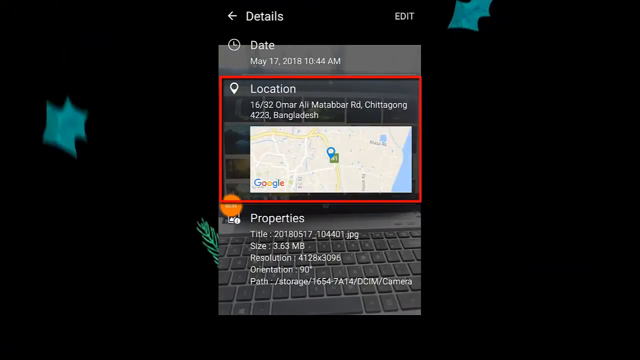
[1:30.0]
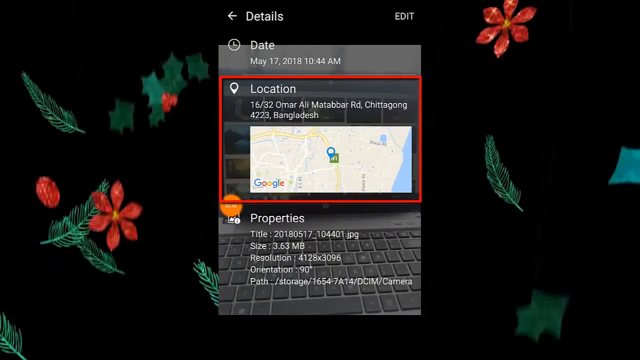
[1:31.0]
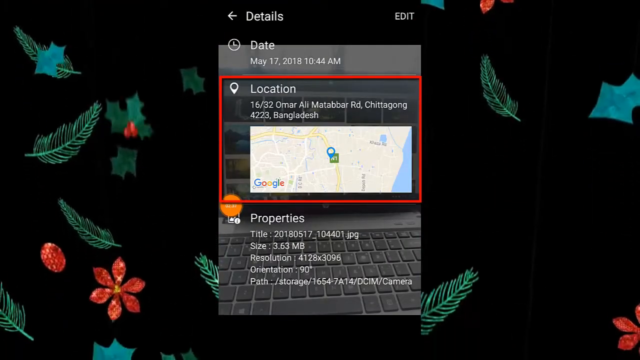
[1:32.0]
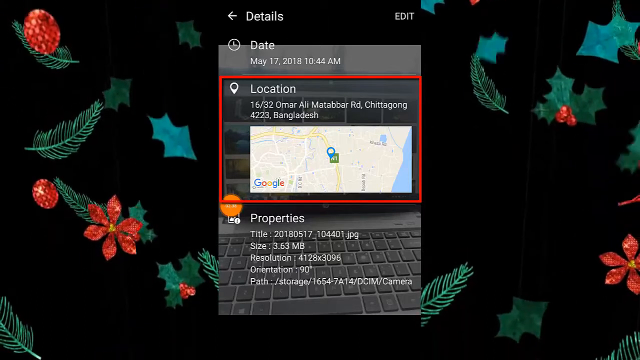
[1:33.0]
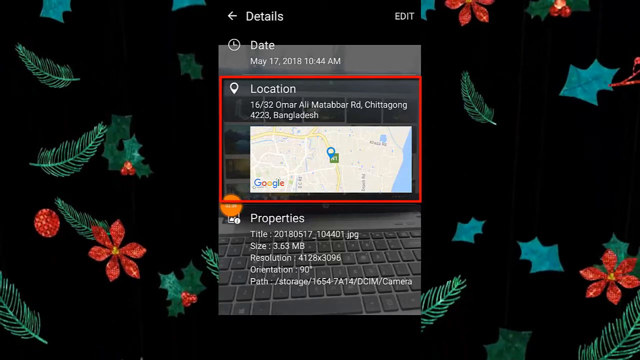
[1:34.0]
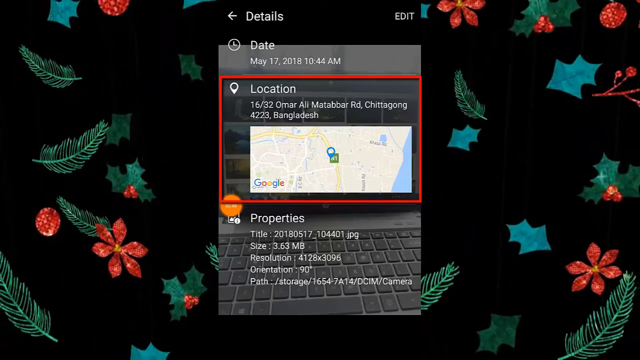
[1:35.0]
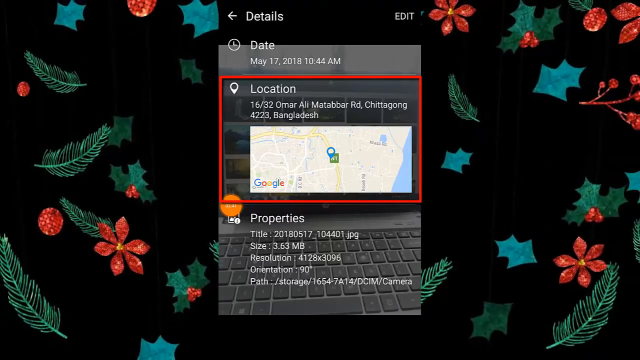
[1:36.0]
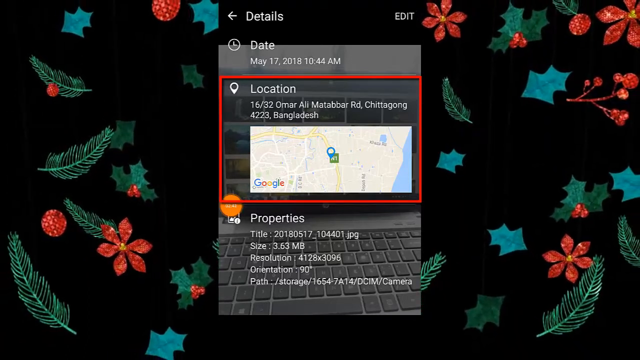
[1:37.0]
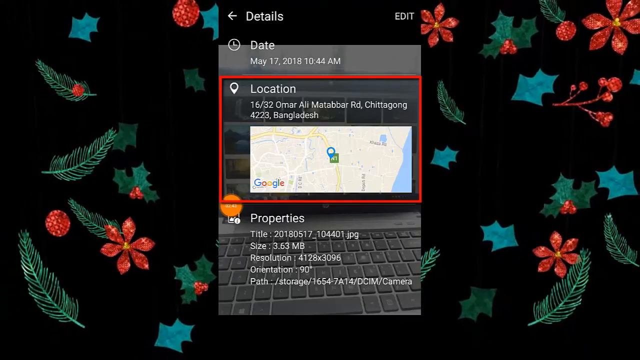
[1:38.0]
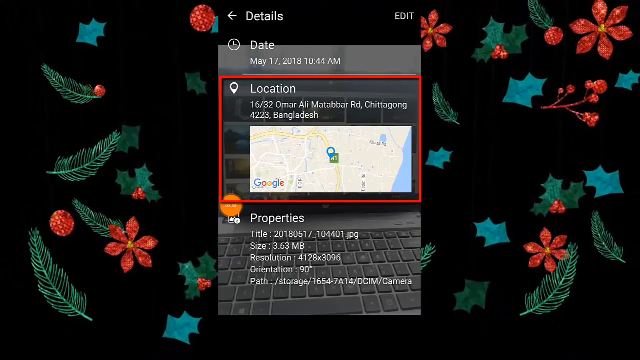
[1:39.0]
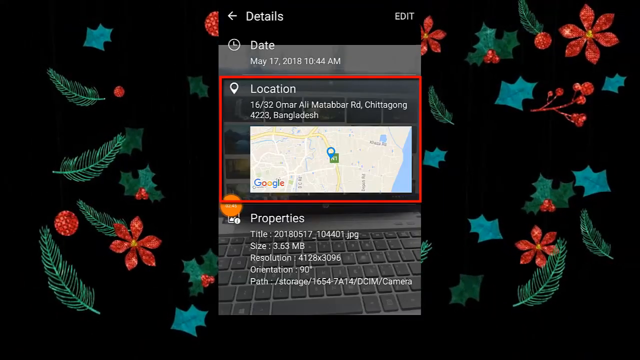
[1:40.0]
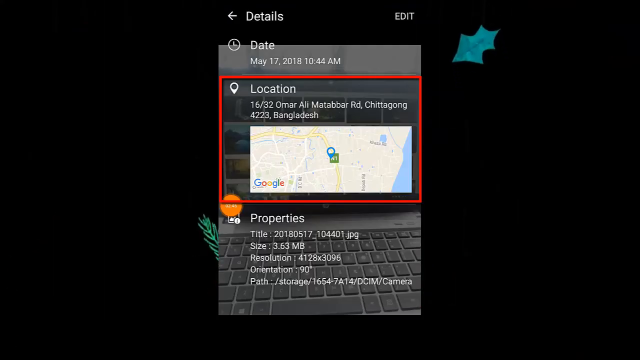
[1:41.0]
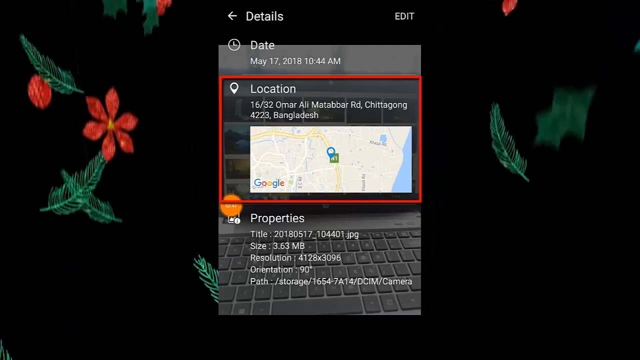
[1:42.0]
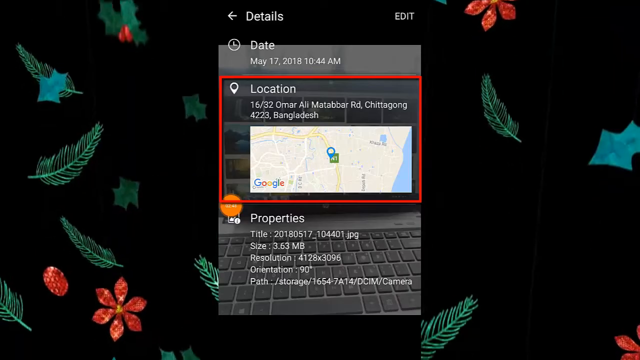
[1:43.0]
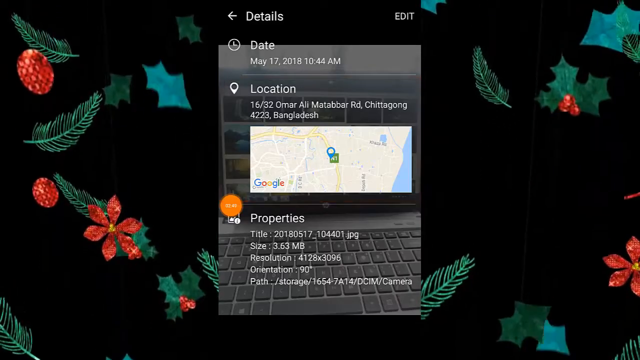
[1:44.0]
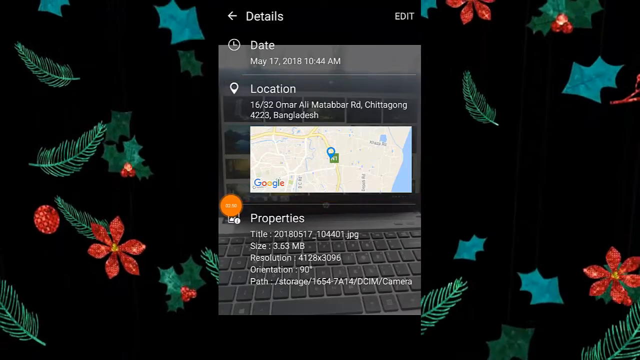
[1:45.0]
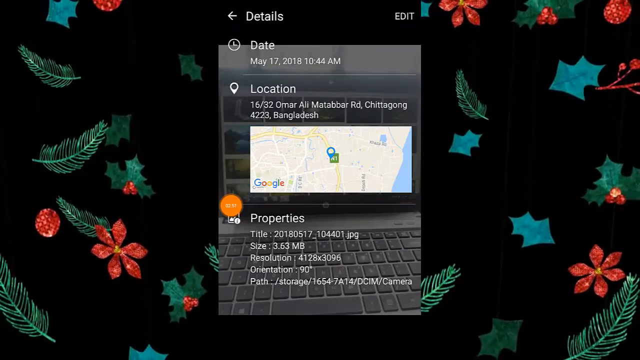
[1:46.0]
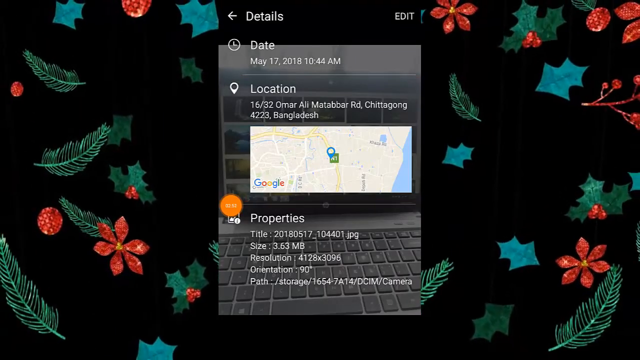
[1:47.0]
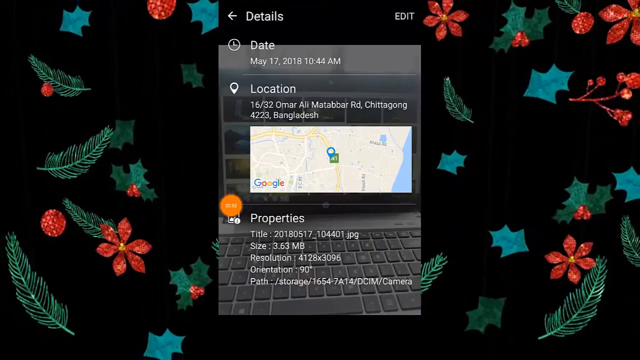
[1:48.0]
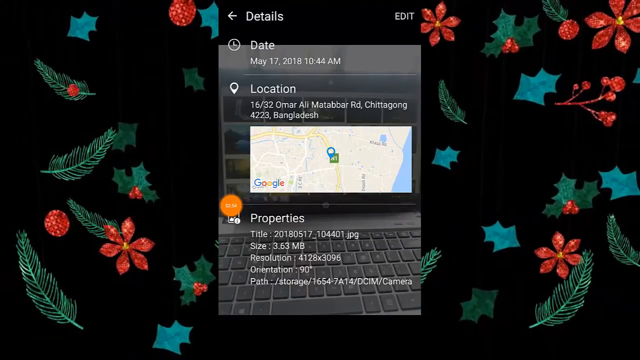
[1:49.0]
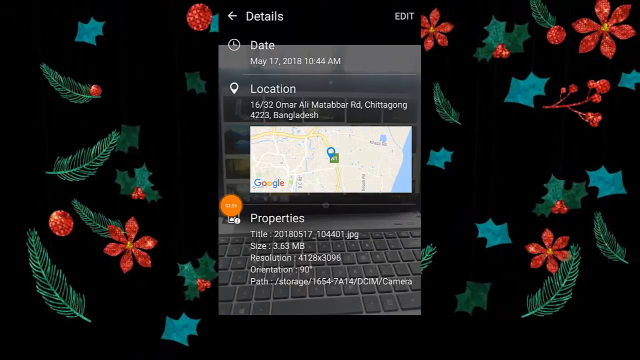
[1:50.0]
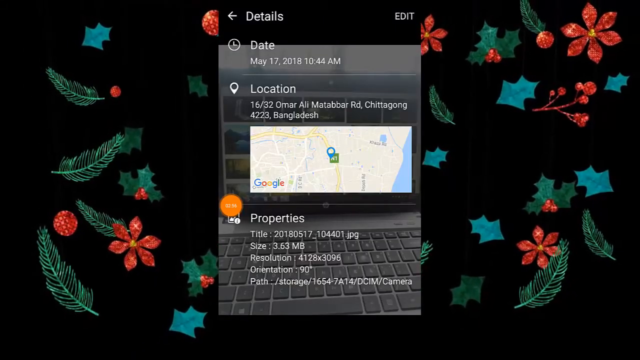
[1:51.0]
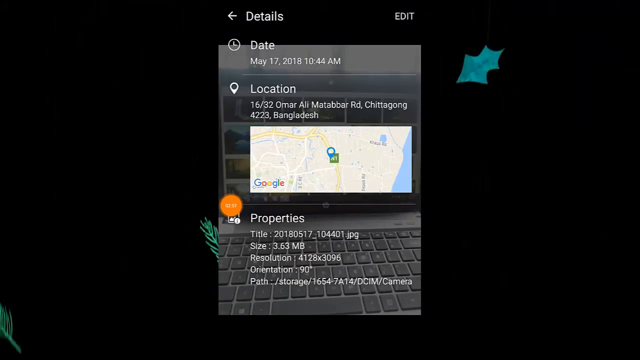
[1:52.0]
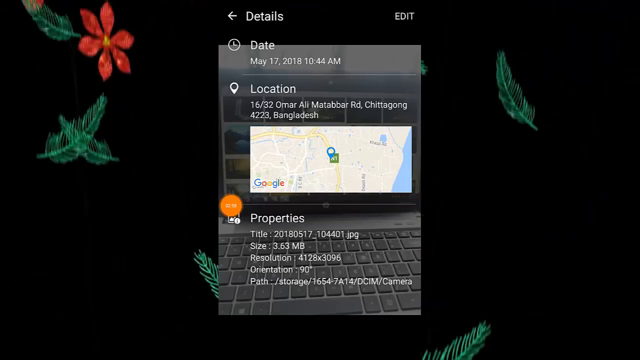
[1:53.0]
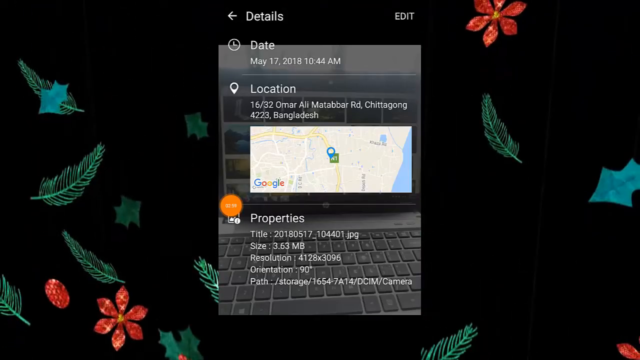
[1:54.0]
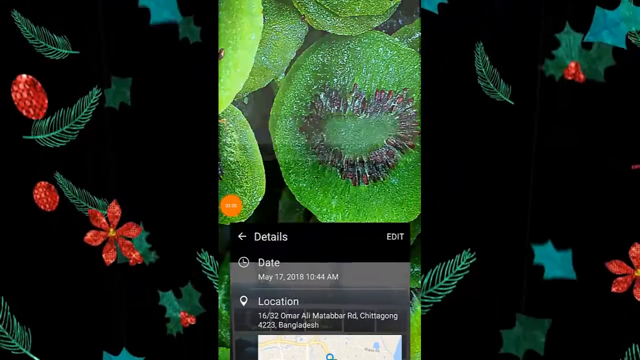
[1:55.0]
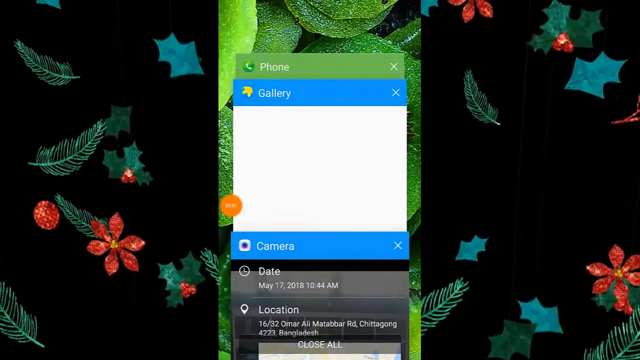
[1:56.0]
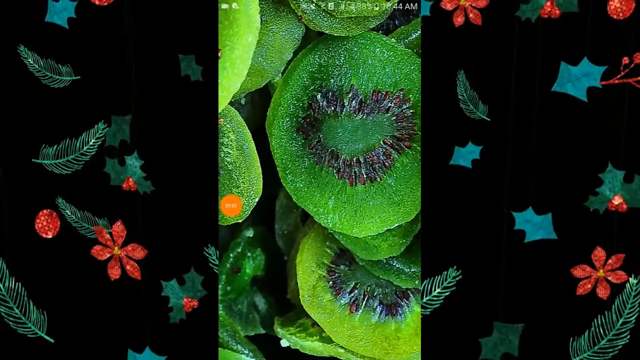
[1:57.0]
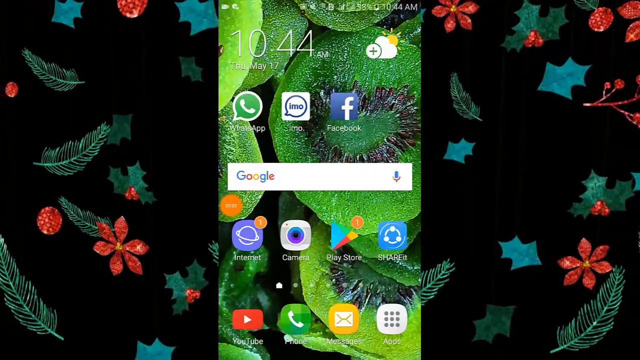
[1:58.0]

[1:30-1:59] A smartphone screencast shows the details page, with the date, May 17th, 2018; the location, circled in red, showing 42 Omar Ali Madabar Road in Chittagong, 4223 Bangladesh; and the properties, including title, size, resolution, orientation, and path. To the side of the screencast is a black background with an animation of leaves and flowers blowing in the wind. Under the Location option is an image of Google Maps with a blue pin icon showing the exact location of the phone. The user closes the details page and opens the gallery menu from the camera, then closes that and goes to the home screen, which shows a bunch of slices of green kiwi fruit stacked on top of each other. The home screen shows the time 10:44 a.m. and several app icons: WhatsApp, IMO, Facebook, Internet, Camera, Play Store, and Shareit.